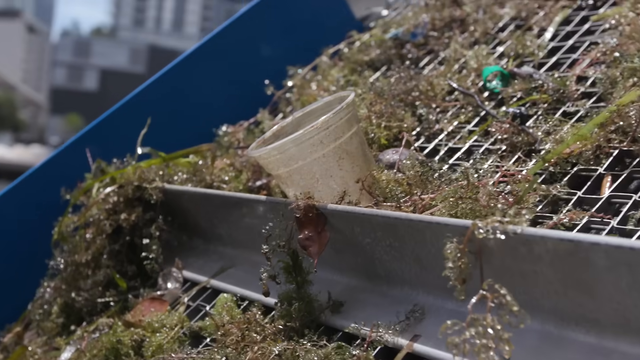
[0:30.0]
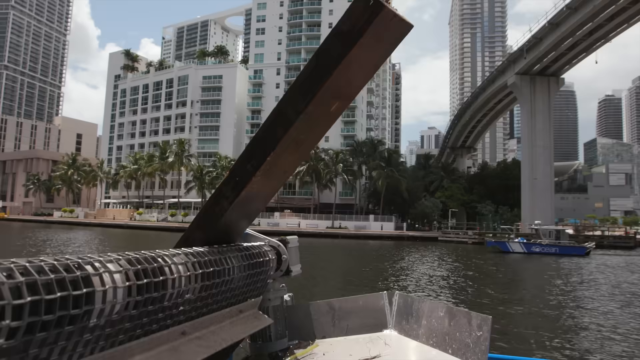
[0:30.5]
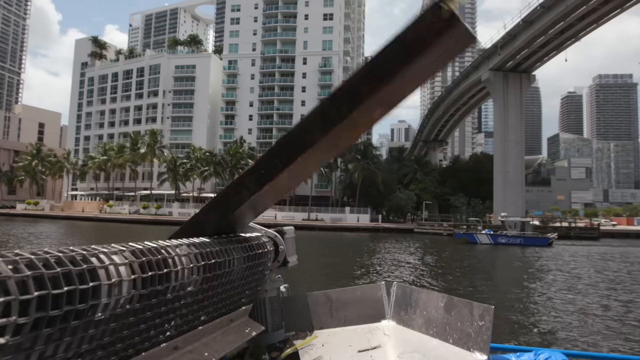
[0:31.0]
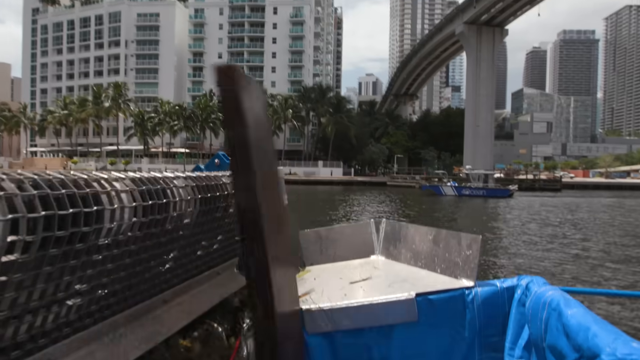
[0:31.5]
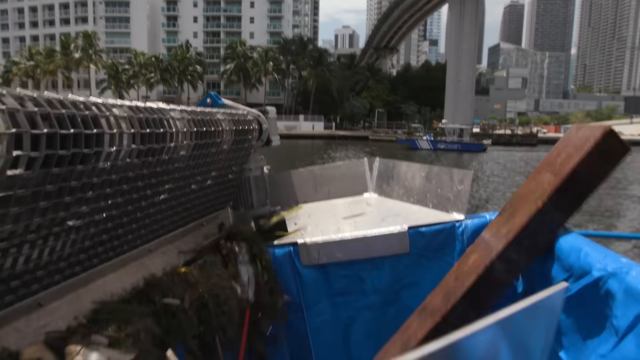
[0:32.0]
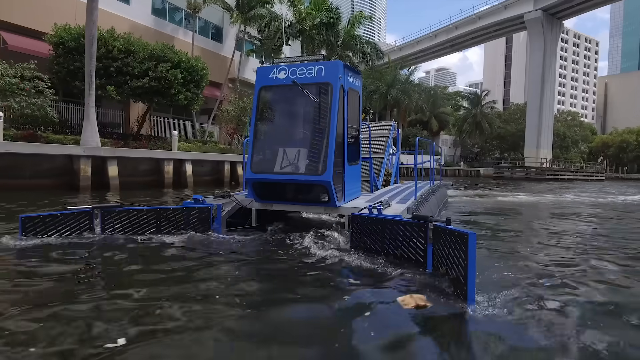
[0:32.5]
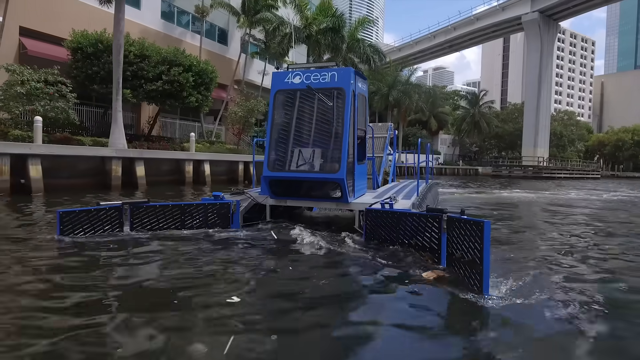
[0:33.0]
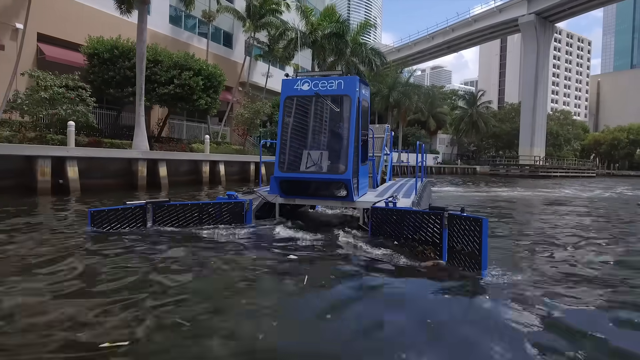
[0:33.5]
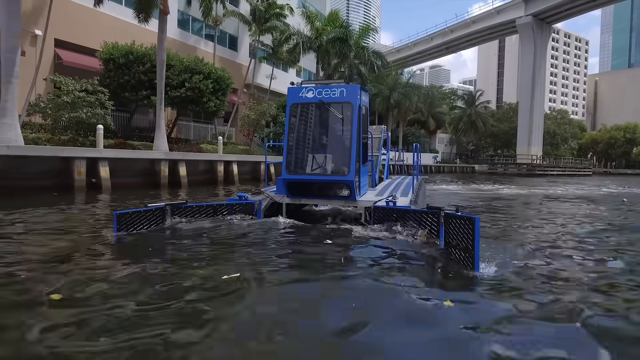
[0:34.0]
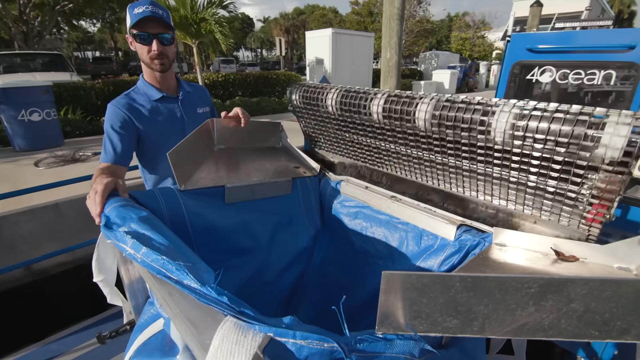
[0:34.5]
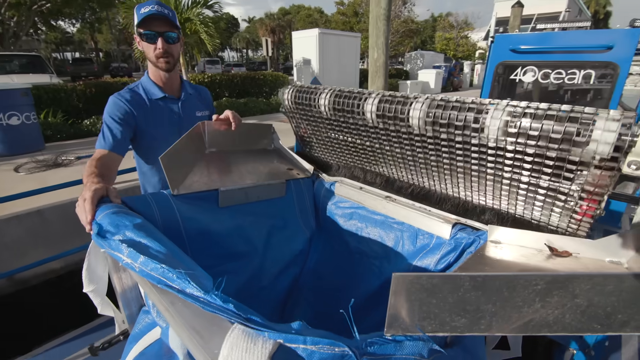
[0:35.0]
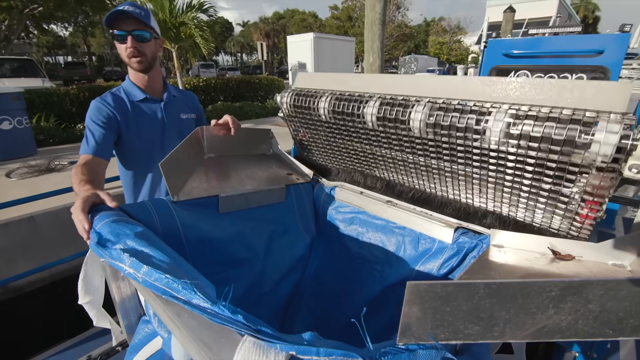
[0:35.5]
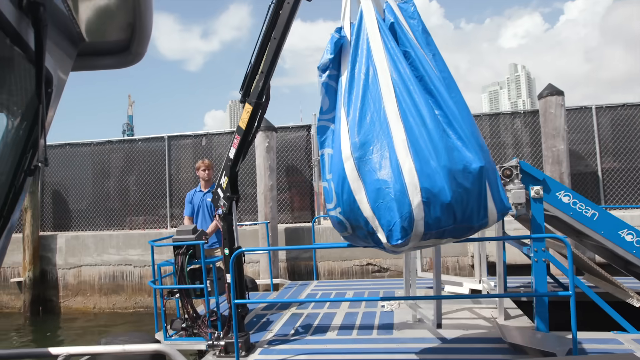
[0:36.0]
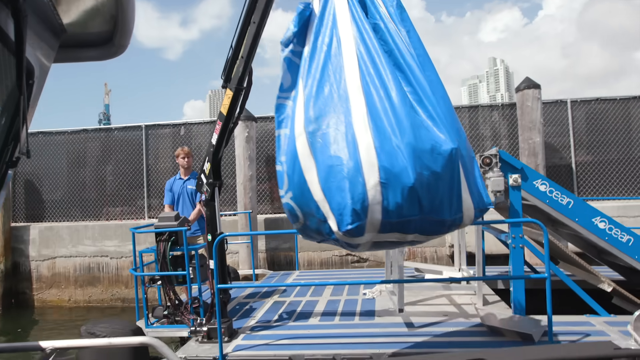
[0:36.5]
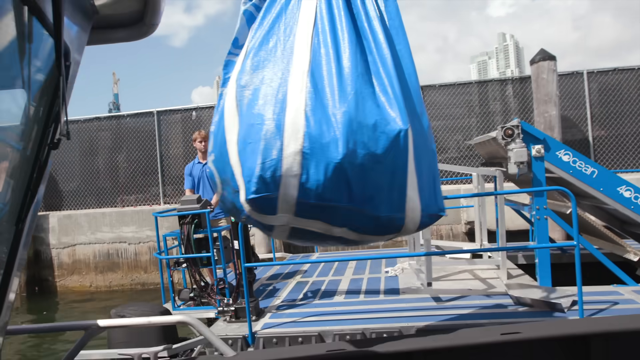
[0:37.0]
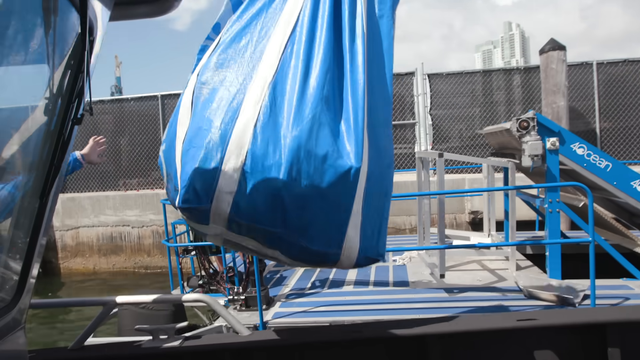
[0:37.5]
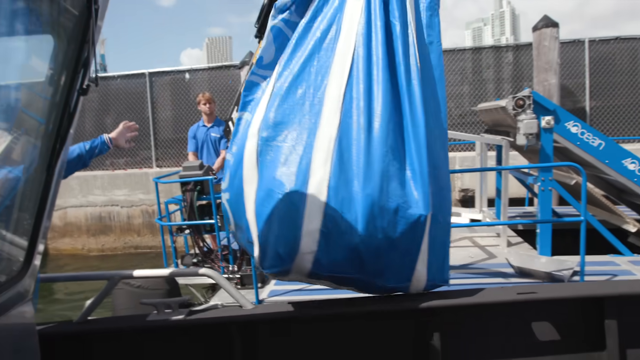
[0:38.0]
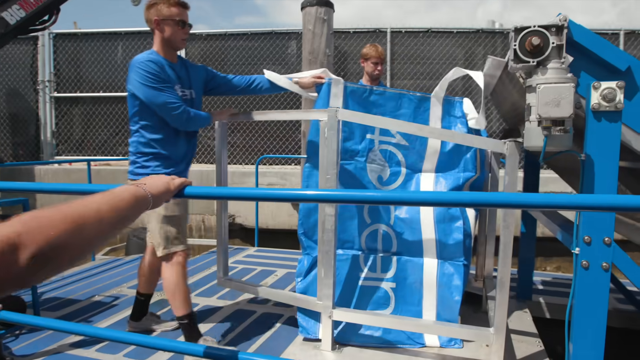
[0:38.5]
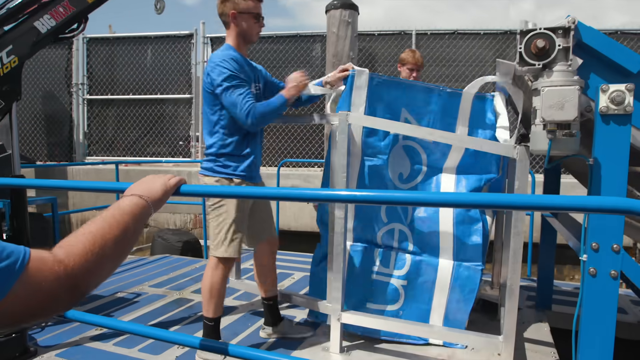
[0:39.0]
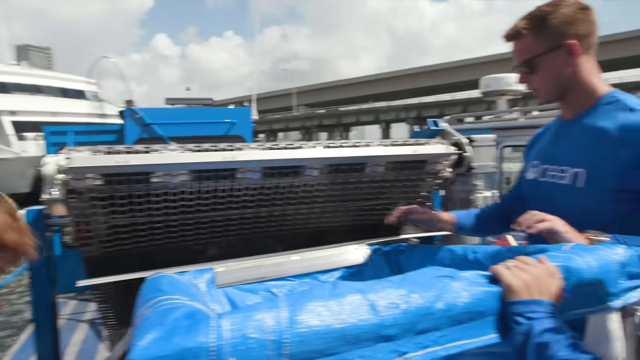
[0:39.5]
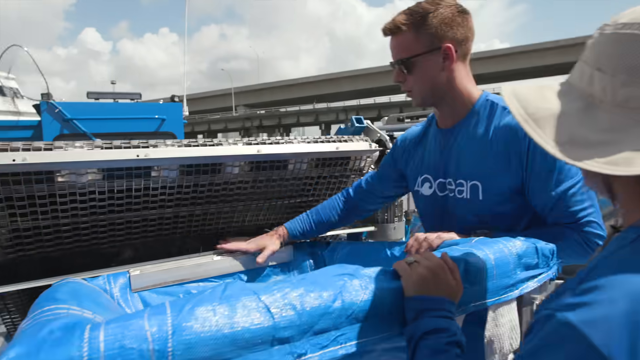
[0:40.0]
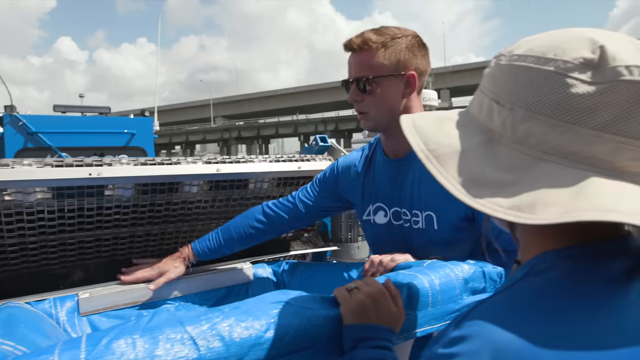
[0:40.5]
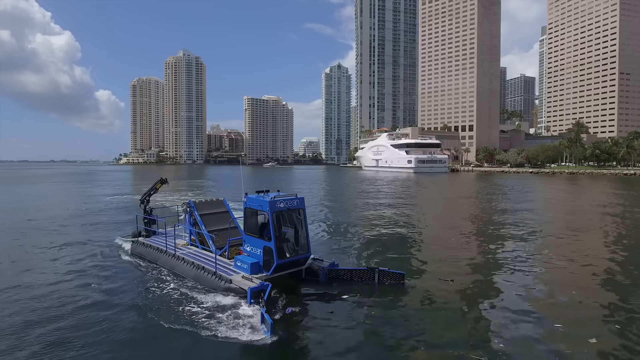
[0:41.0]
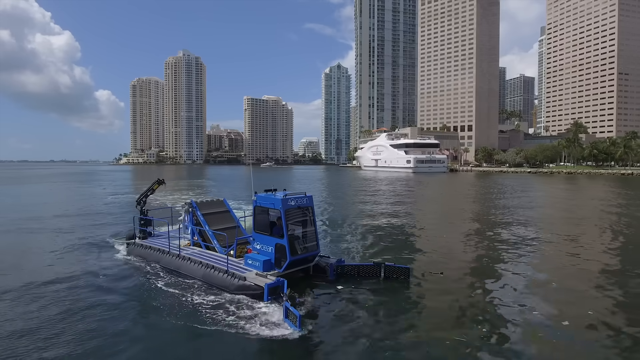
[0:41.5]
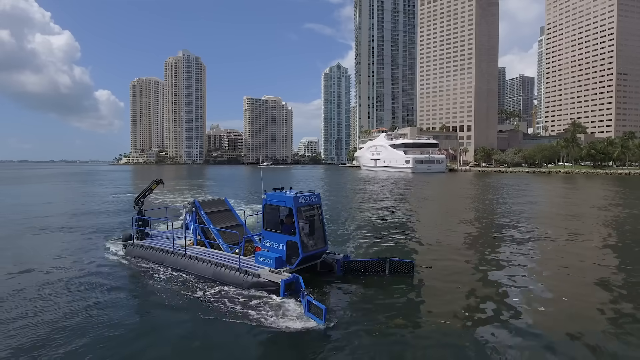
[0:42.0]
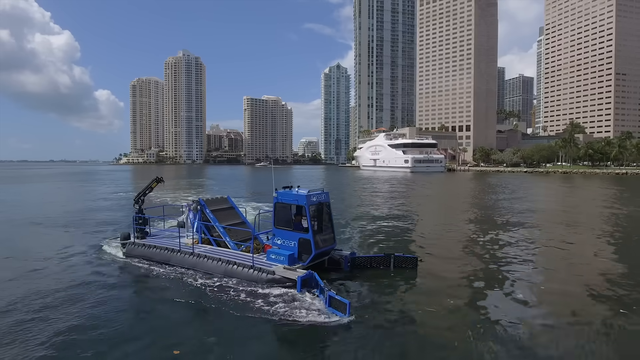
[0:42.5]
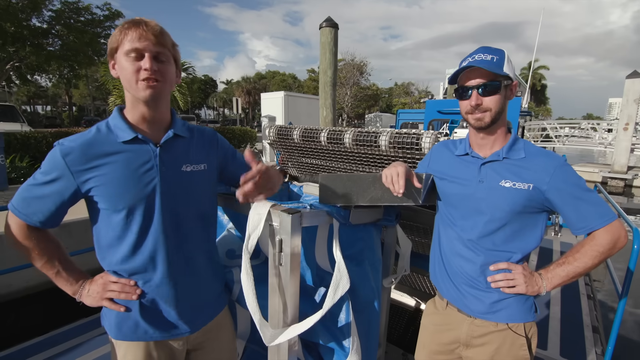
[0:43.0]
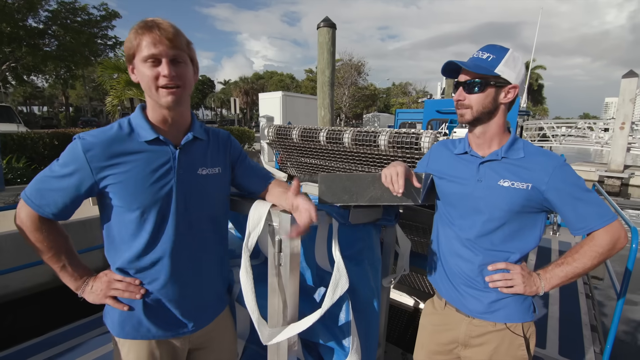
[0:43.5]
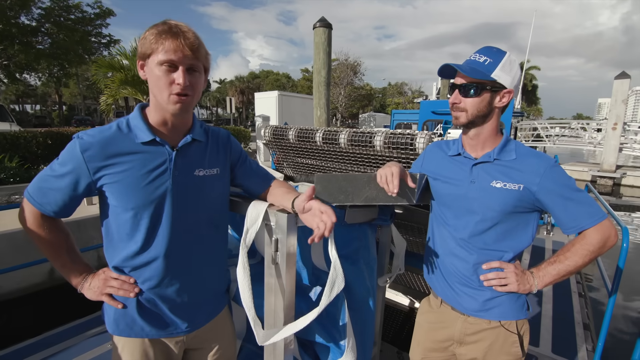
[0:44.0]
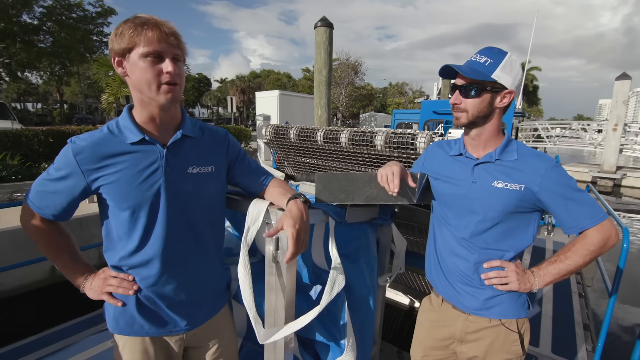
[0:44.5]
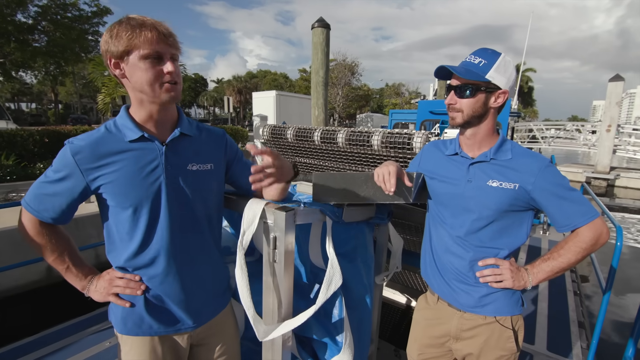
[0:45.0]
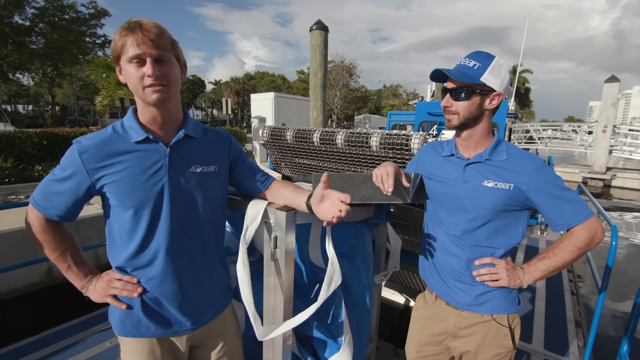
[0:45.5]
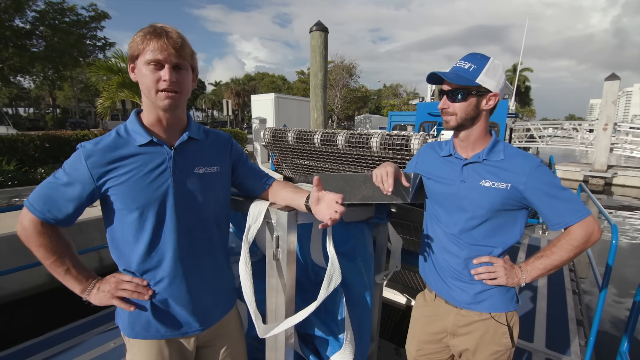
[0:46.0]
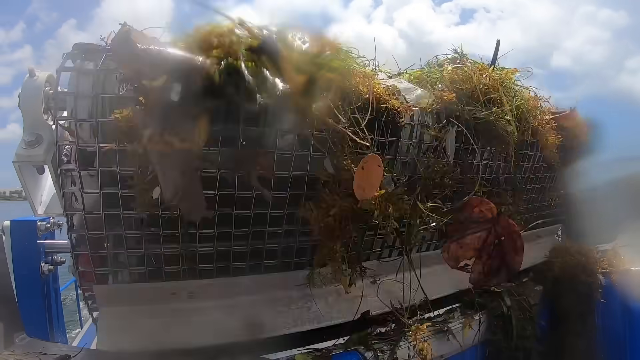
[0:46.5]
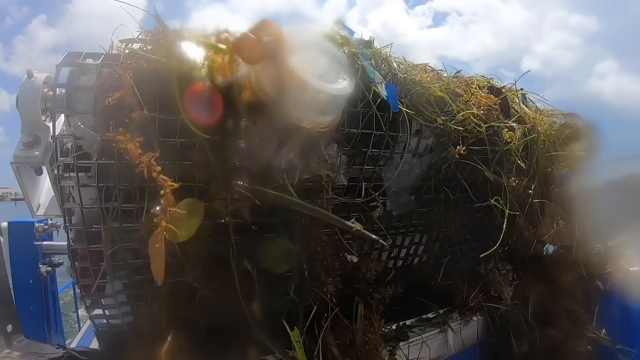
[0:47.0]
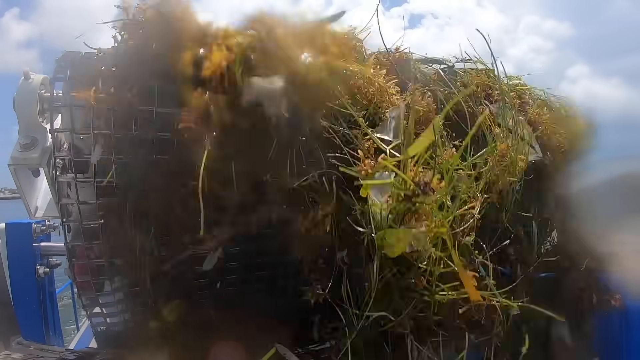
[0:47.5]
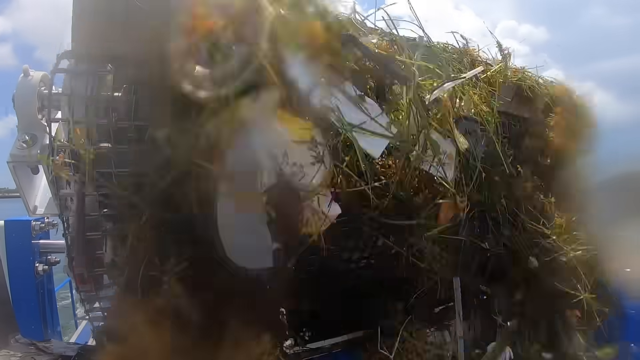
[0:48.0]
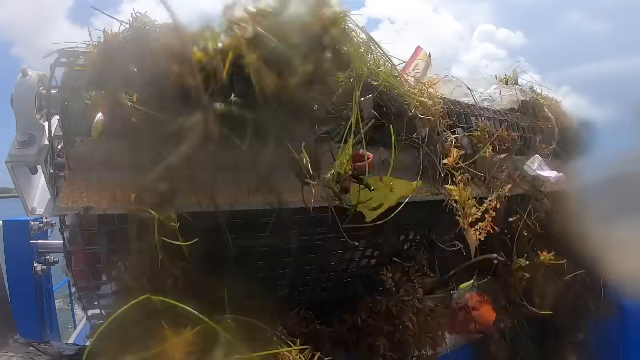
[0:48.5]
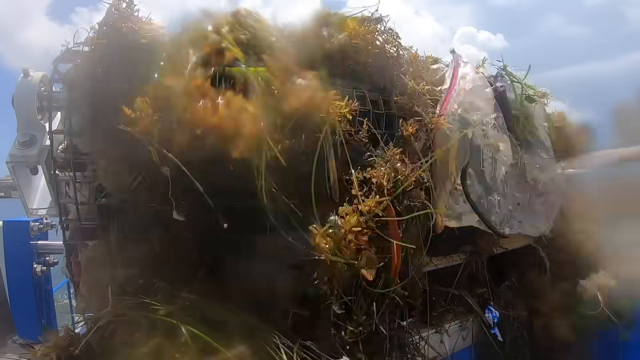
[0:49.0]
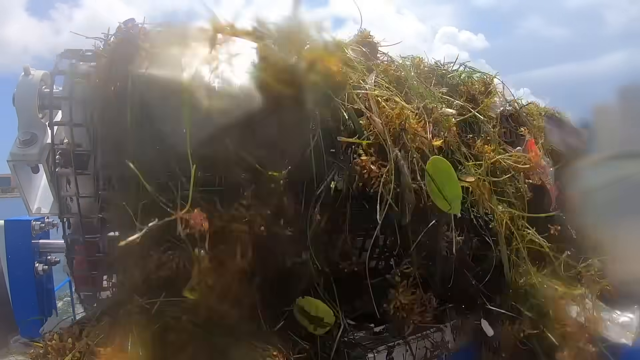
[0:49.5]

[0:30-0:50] A close-up shows a blue conveyor belt with trash, moss and other debris on it. The camera widens out to show that the conveyor is on a machine out in the ocean collecting trash. The front of the machine is shown: it is blue and floats, and written in white at the top is "4-ocean", the number 4 followed by the word "ocean". A large claw on the front opens and closes; when the machine reaches a pile of trash in the ocean, the claw closes and traps the trash, which then goes onto a conveyor and into the back of the boat. Next, a man in a blue short-sleeved shirt stands behind a small control panel. In front of him, a black machine arm holds a large blue bag with white straps around it, full of trash pulled out of the ocean. The bag is then put back onto the machine after it has been emptied.